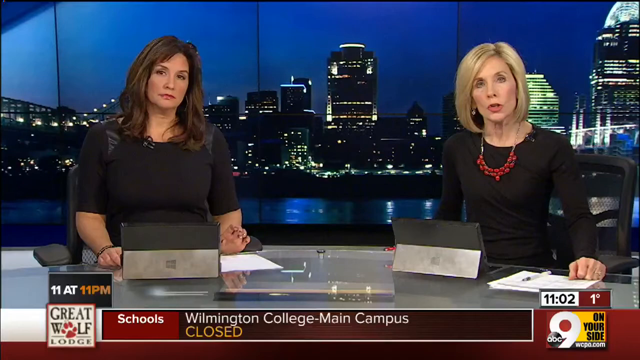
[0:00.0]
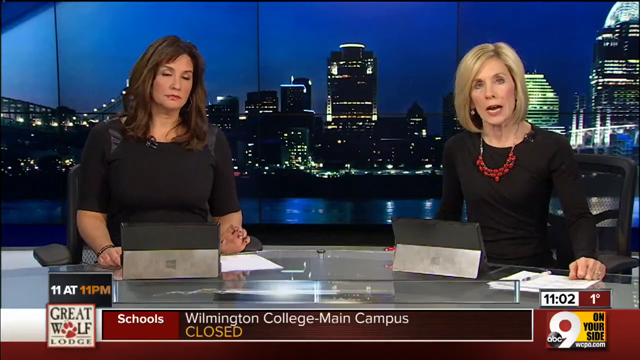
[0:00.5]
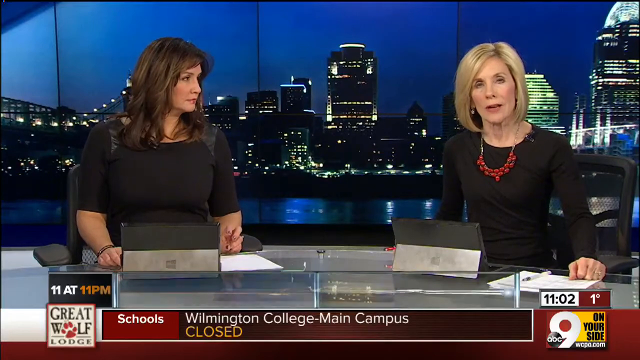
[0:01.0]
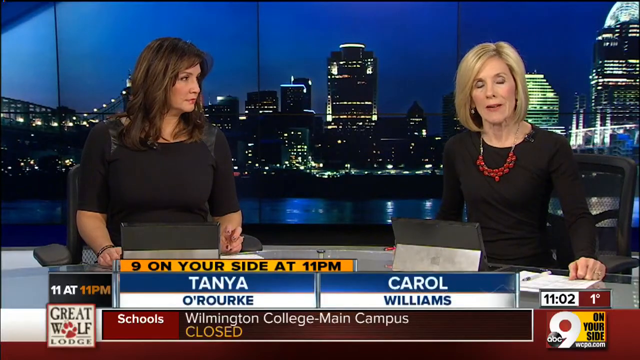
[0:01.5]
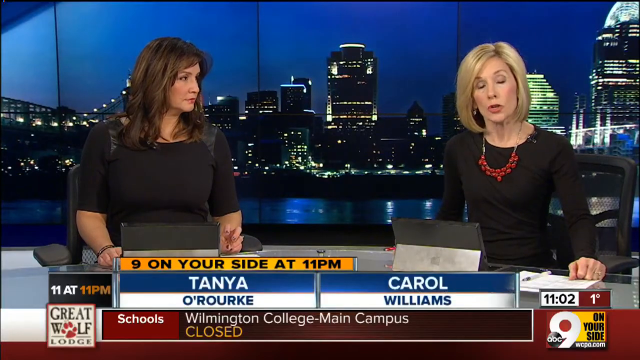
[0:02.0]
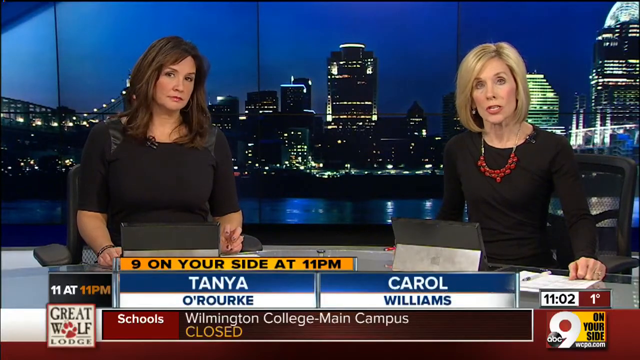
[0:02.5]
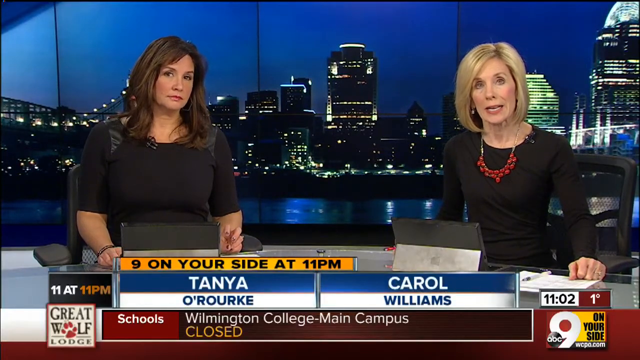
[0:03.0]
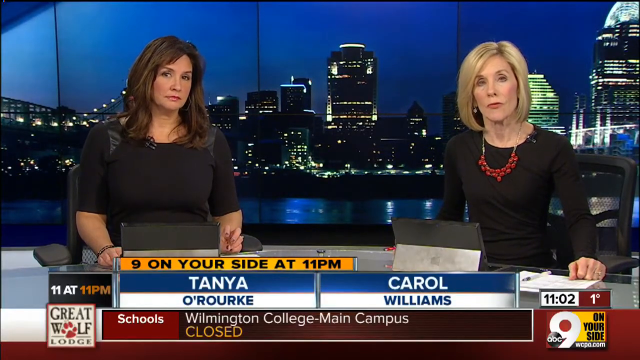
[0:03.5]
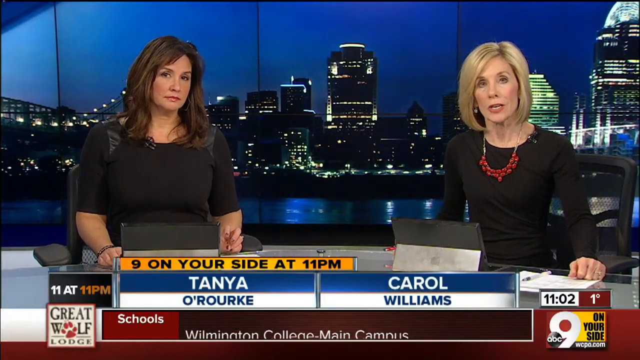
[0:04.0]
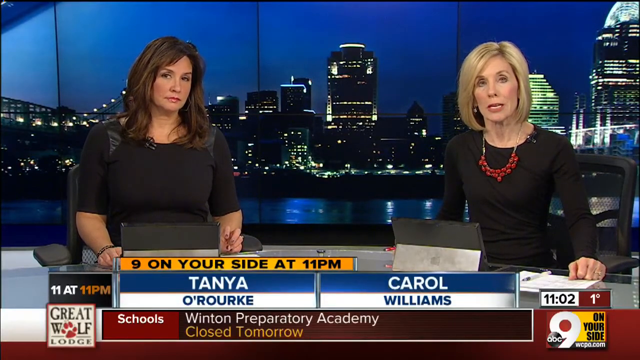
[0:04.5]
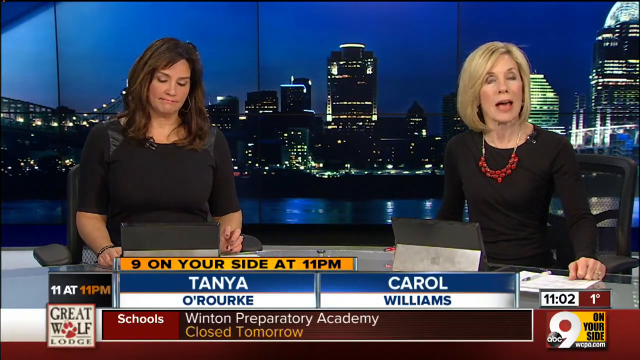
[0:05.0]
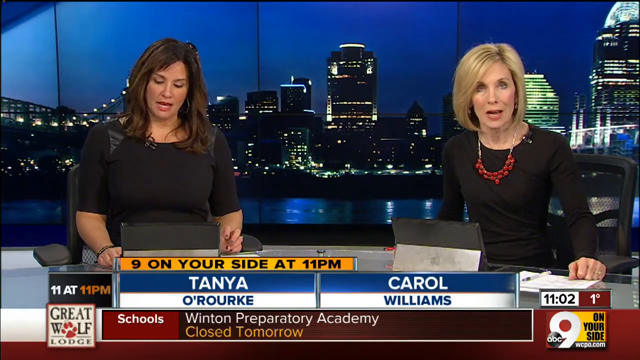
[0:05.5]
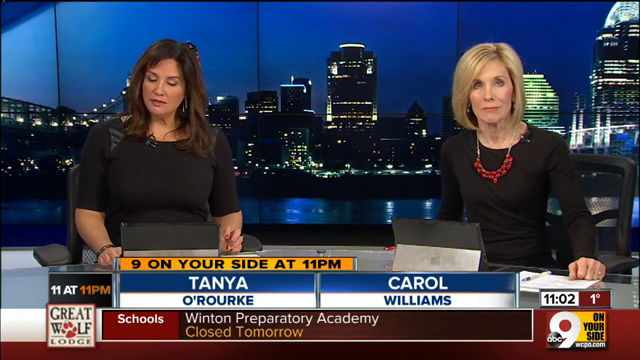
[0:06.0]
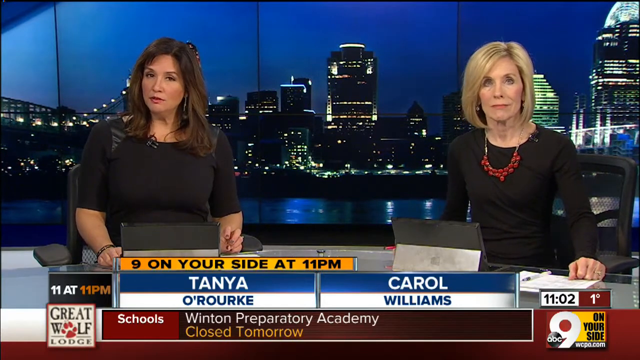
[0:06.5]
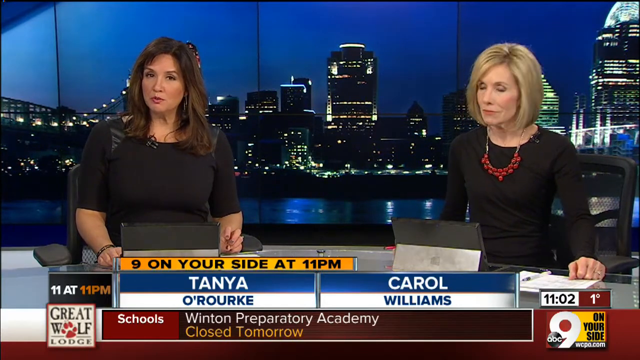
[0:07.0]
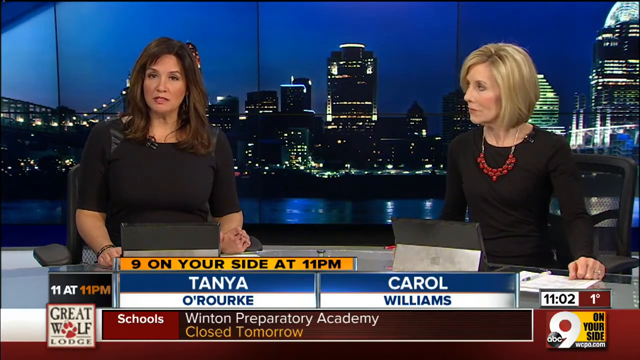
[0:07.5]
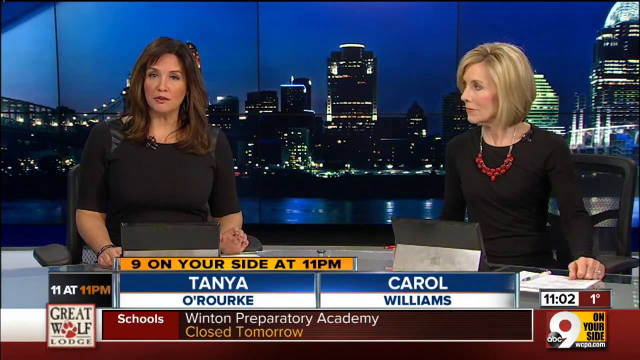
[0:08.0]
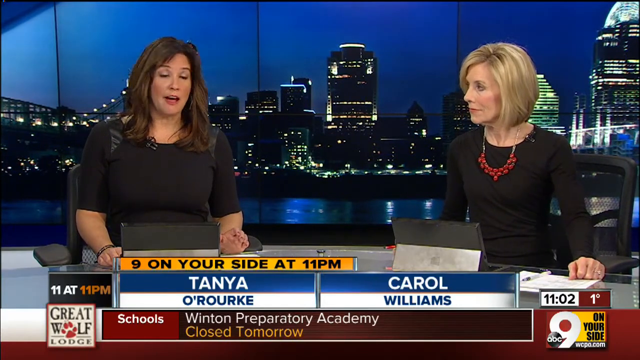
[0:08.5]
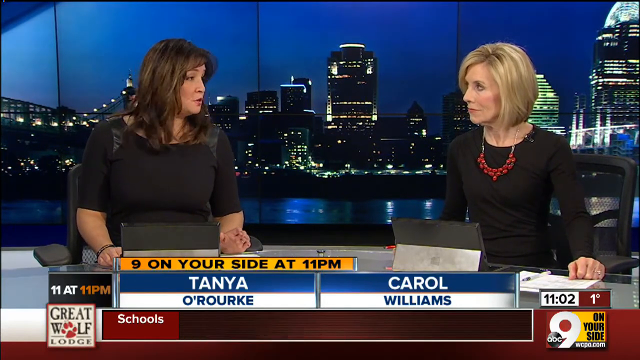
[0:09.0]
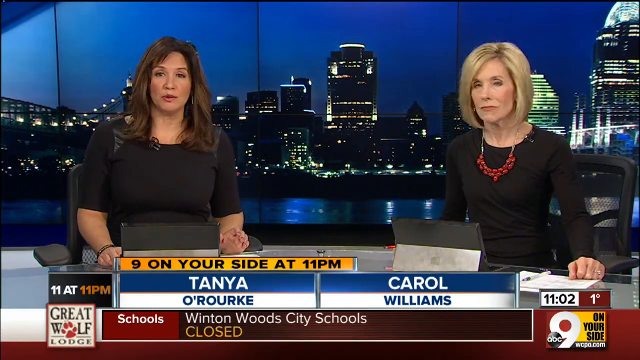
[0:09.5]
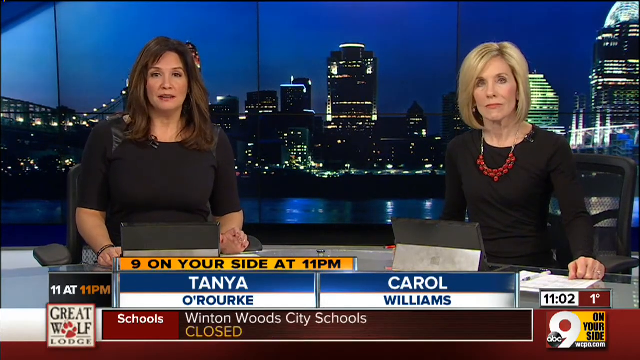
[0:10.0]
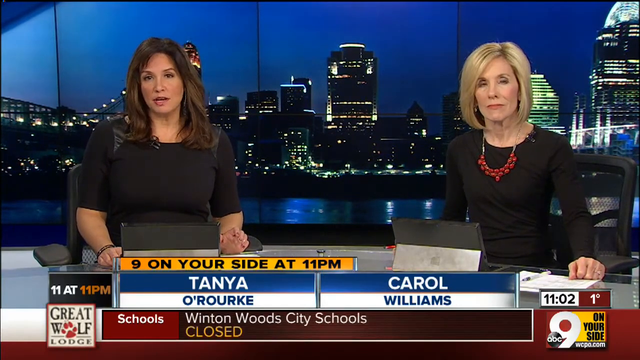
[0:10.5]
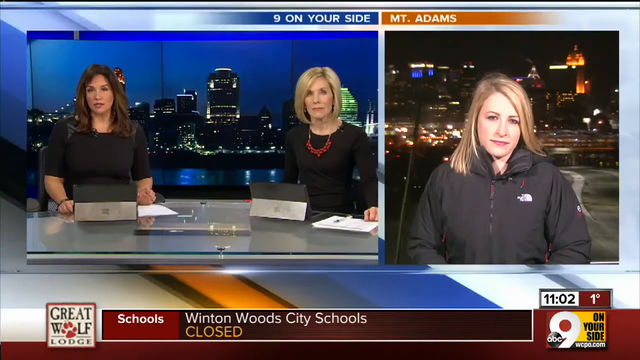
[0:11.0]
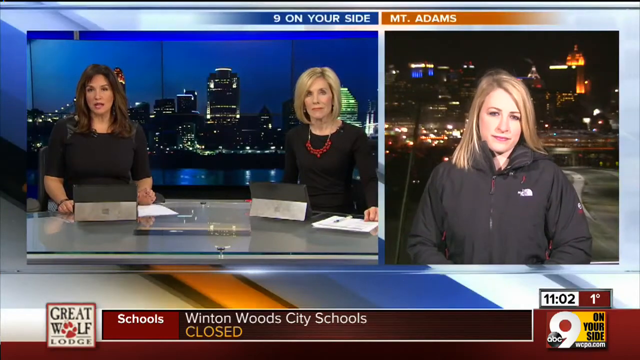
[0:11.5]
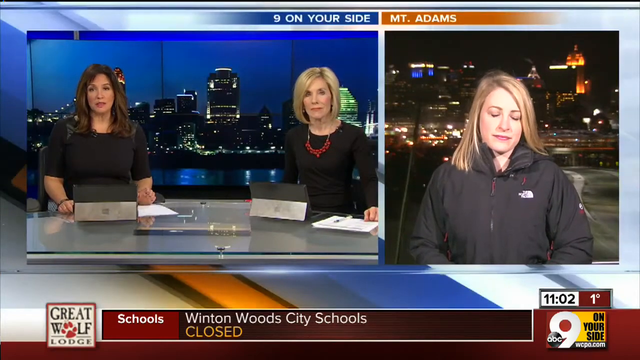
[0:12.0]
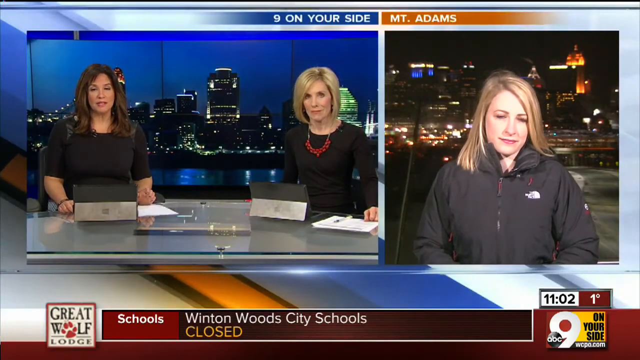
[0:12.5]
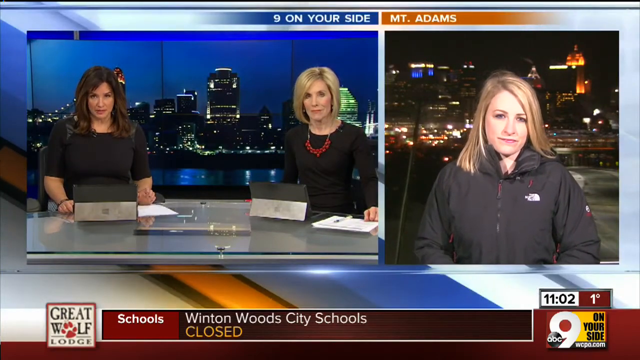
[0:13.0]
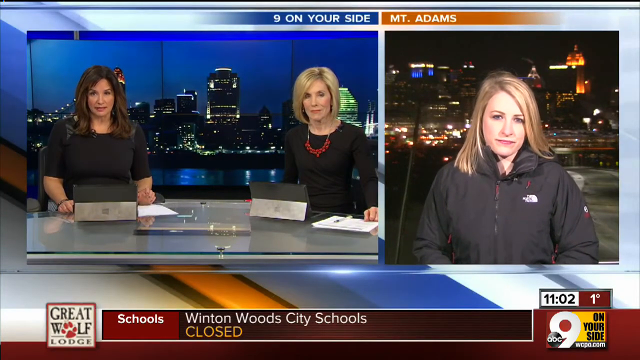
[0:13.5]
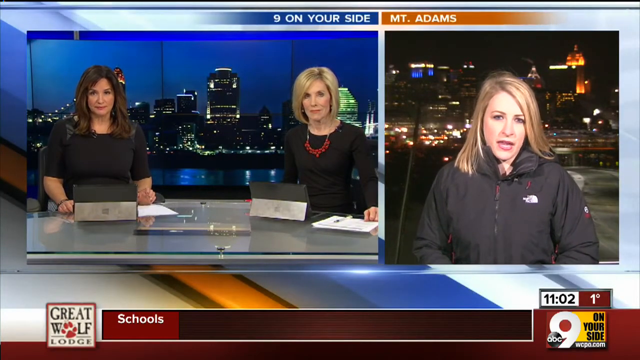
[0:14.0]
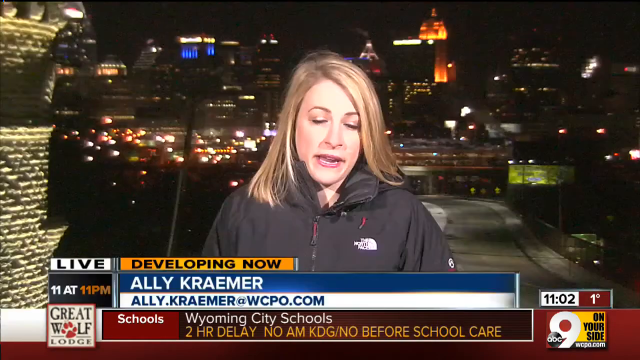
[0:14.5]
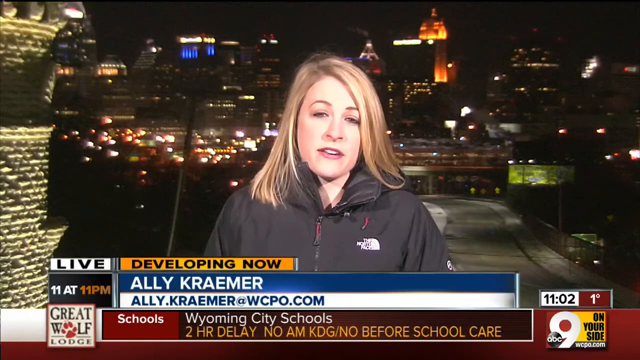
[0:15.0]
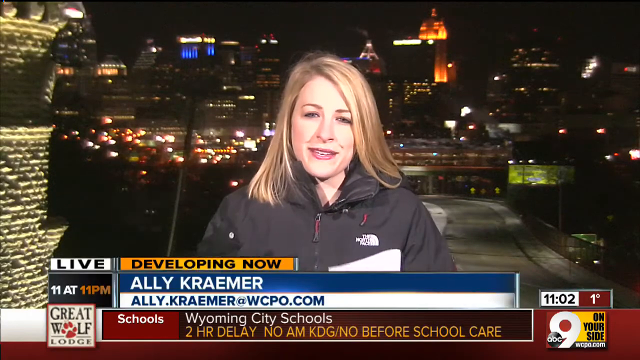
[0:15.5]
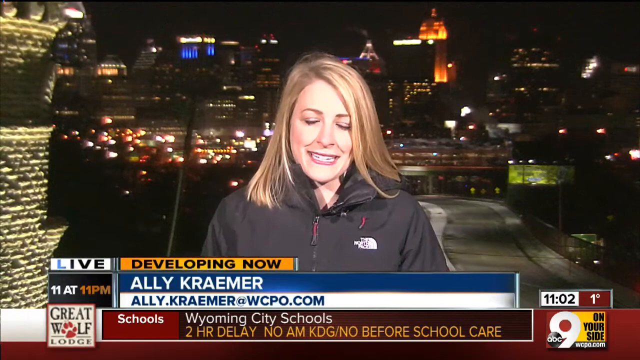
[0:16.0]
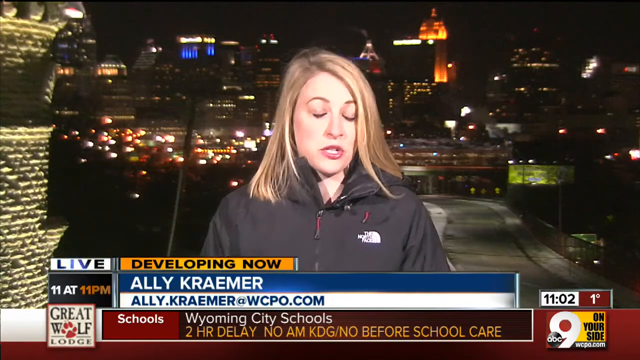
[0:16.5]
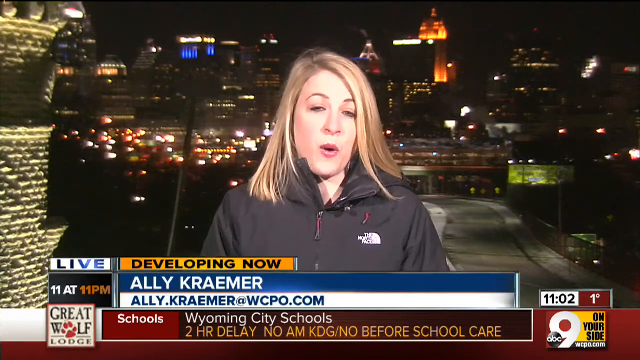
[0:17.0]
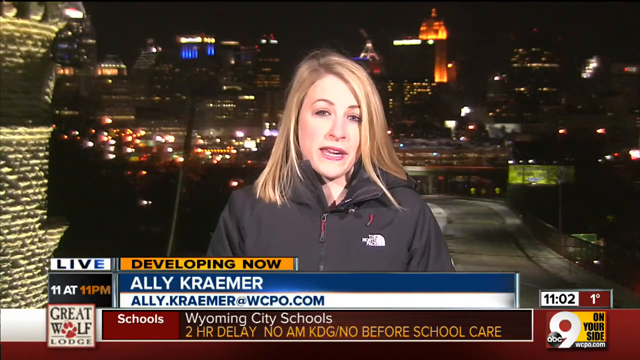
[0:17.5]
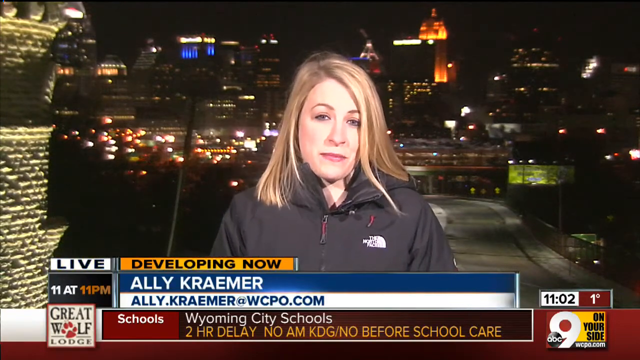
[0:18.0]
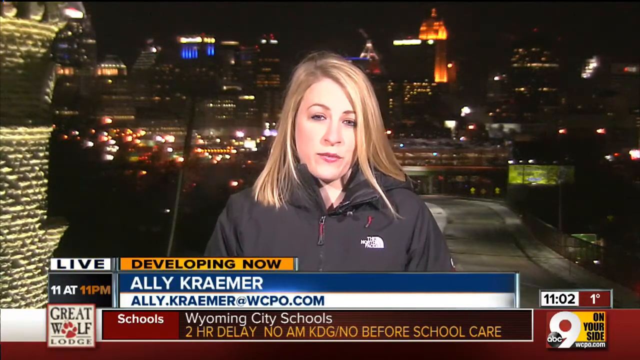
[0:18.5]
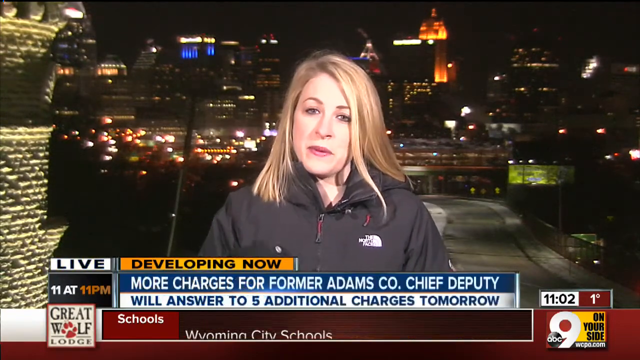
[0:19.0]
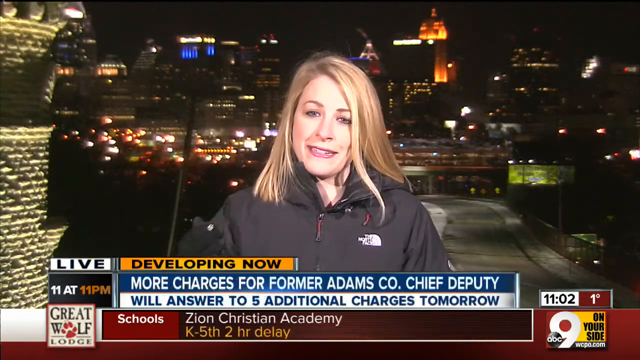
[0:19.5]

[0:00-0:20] A television broadcast shows "11 at 11 PM." At the start, two reporters, Tana O'Rourke and Carrie Williams, appear; both are women. The woman on the right has blonde hair and the woman on the left has brown hair. They are wearing black, and the woman on the right has a red necklace. Text along the bottom lists school closings, including "Wellington College main campus" closed, "Winton Wood City Schools" closed, "Wyoming City Schools, two-hour delay," and "Zion Christian Academies, K5, two-hour delay." After that, there is a glimpse of a city. A "developing now" banner appears with "Ali Kramer" and "AliKramer.wcpo," and the headline reads "More charges for former Adams CEO, Chief Deputy will answer to five additional charges tomorrow."